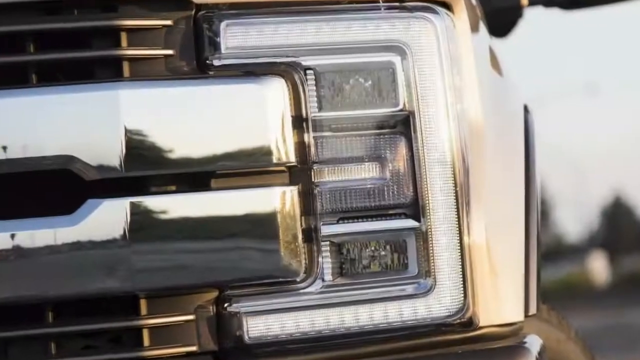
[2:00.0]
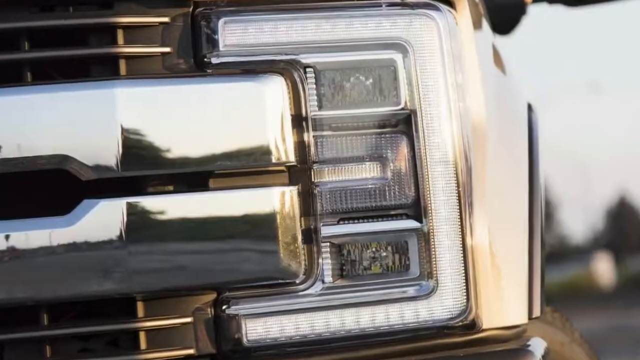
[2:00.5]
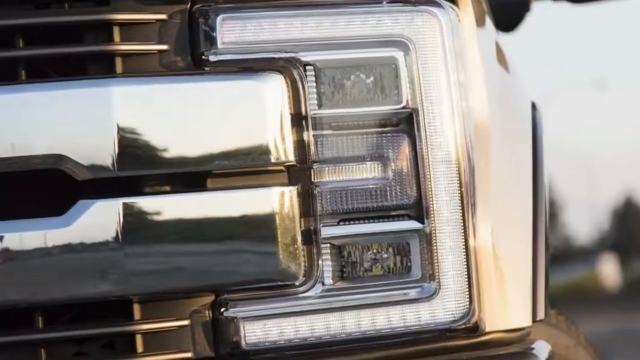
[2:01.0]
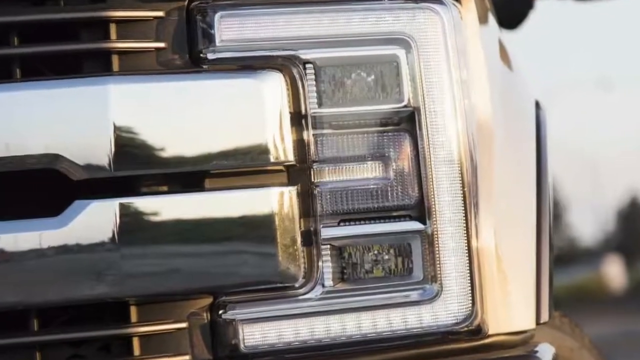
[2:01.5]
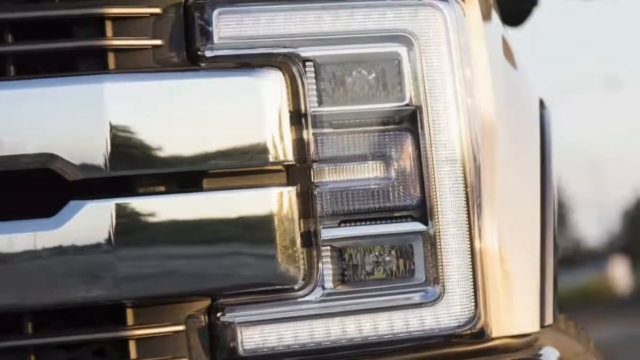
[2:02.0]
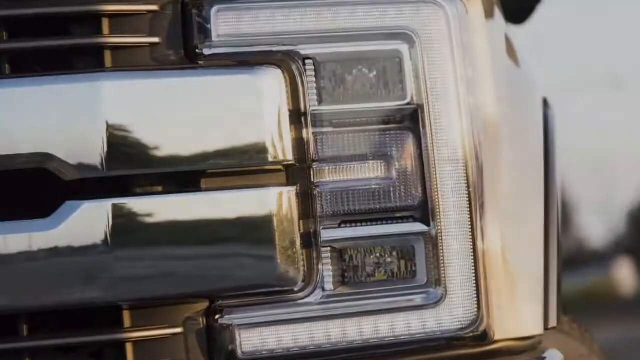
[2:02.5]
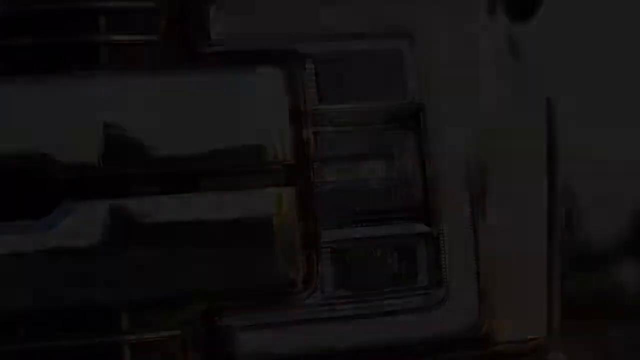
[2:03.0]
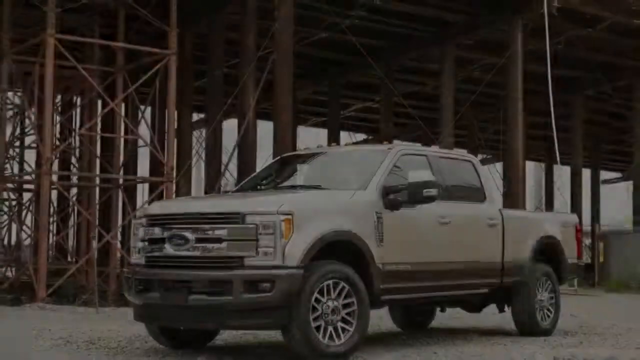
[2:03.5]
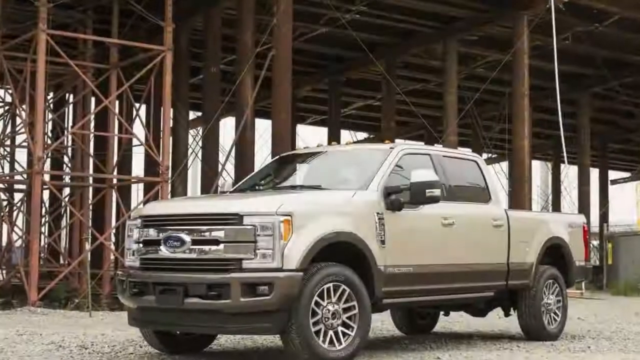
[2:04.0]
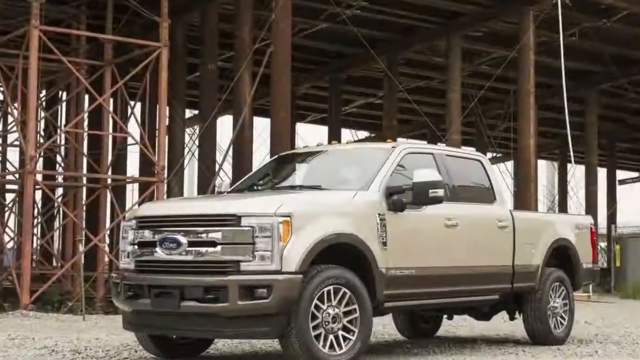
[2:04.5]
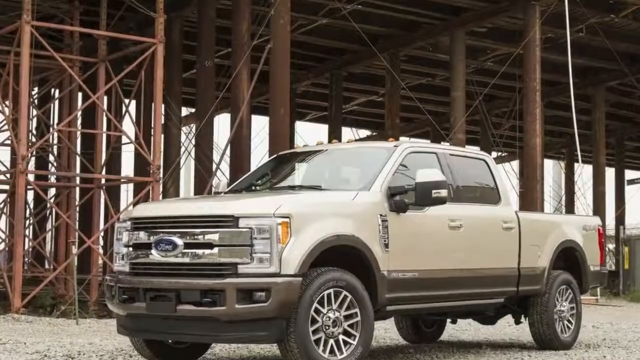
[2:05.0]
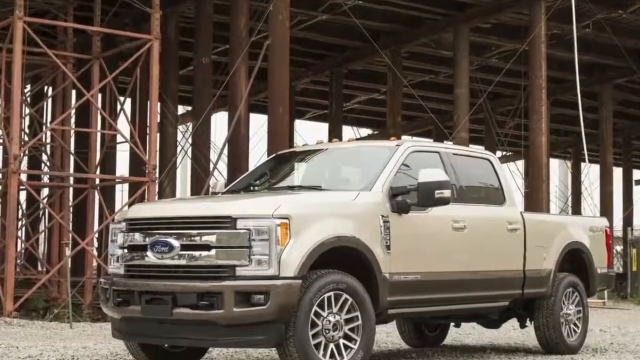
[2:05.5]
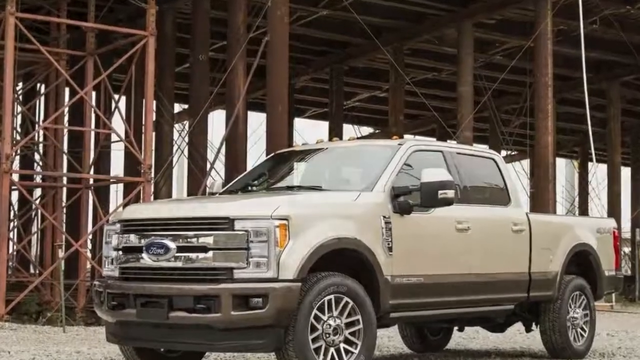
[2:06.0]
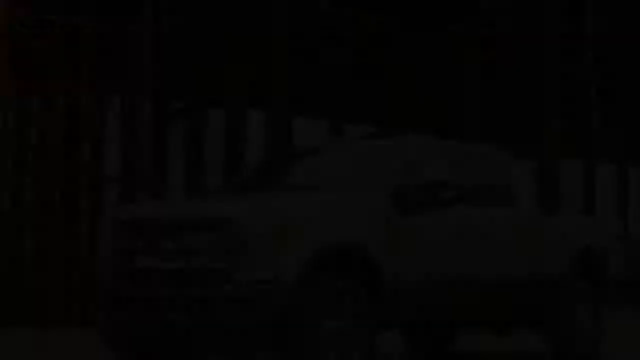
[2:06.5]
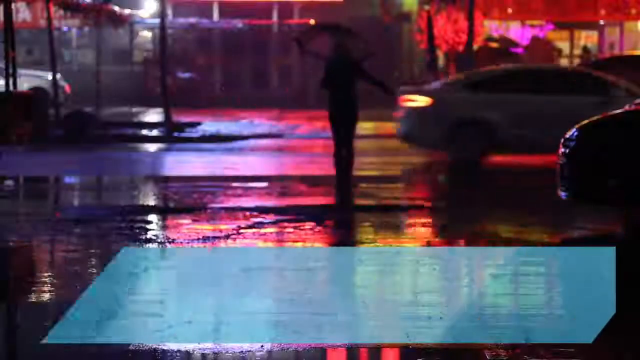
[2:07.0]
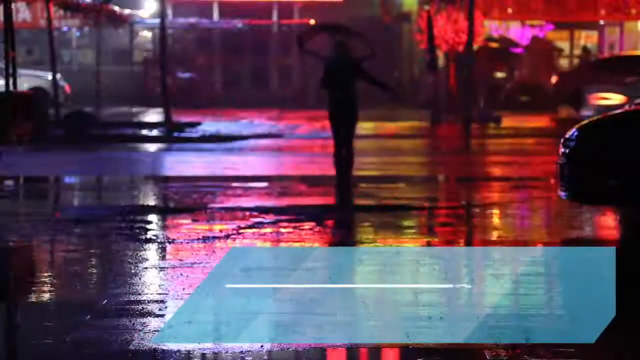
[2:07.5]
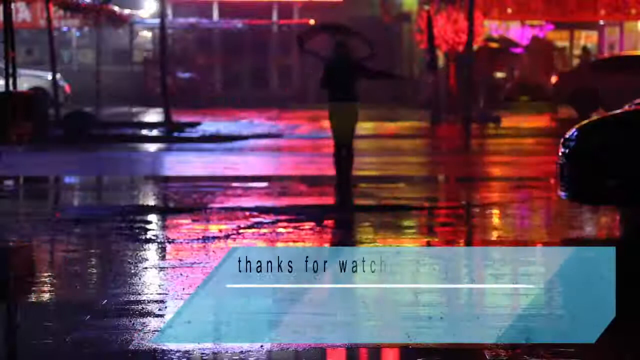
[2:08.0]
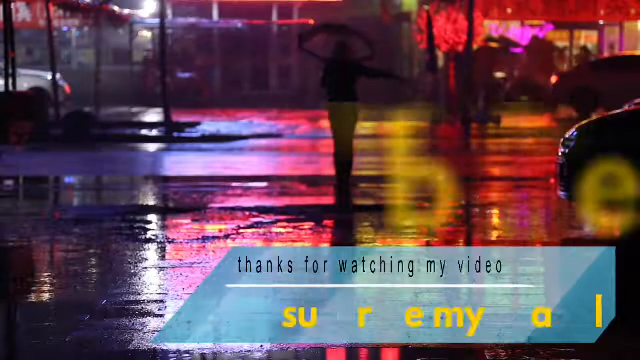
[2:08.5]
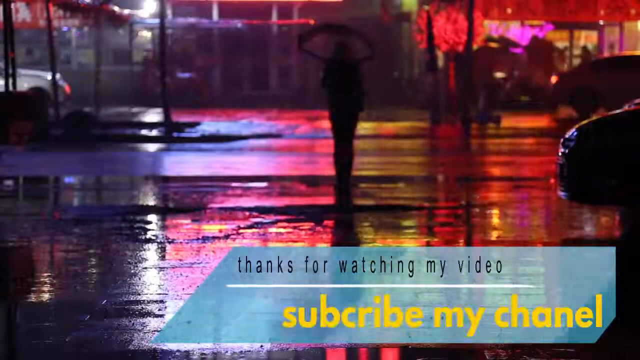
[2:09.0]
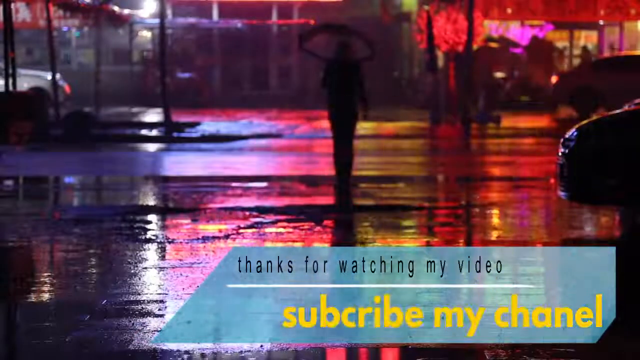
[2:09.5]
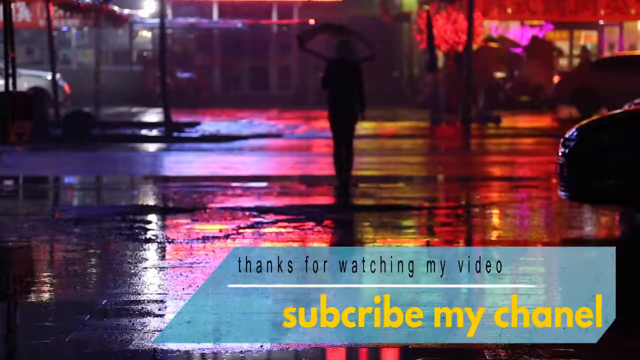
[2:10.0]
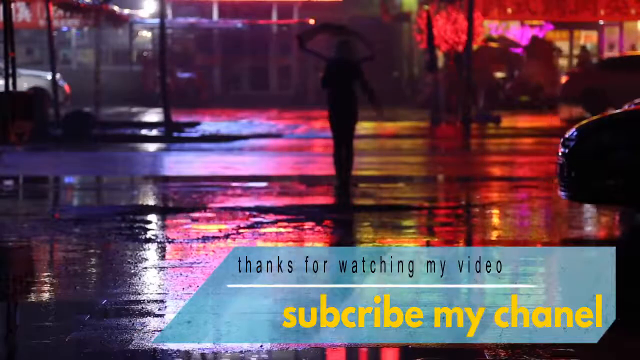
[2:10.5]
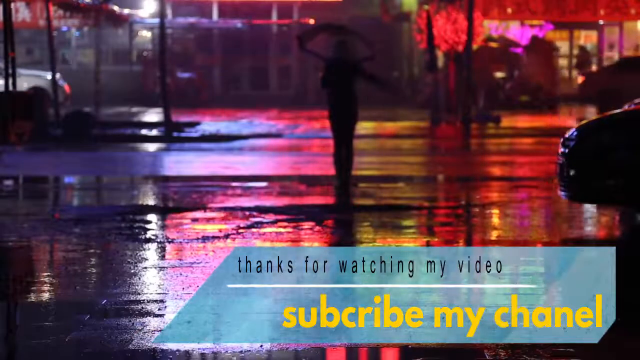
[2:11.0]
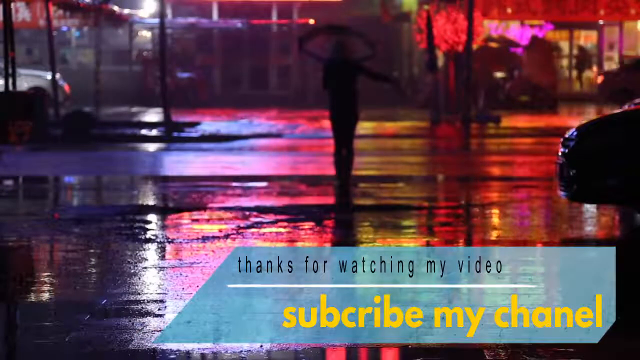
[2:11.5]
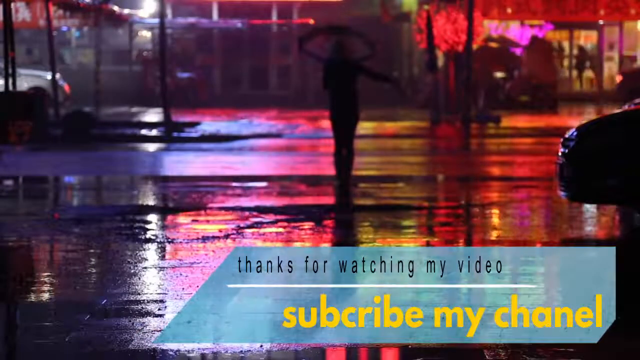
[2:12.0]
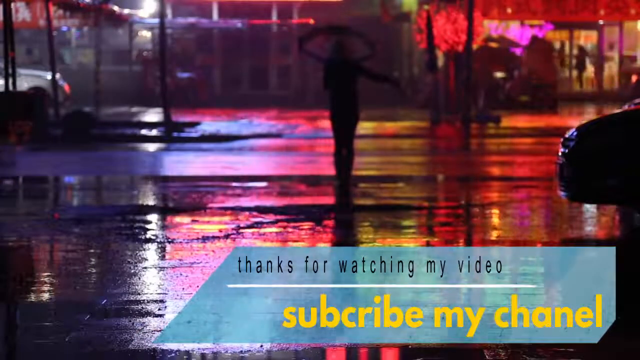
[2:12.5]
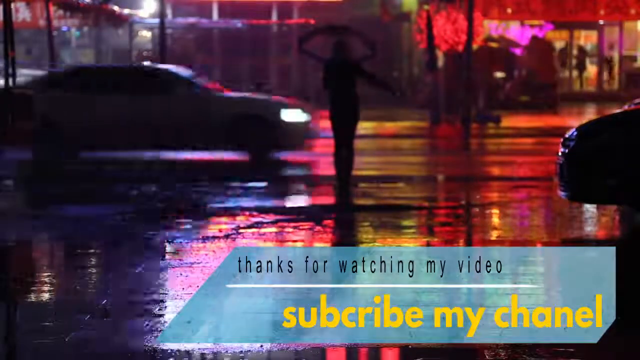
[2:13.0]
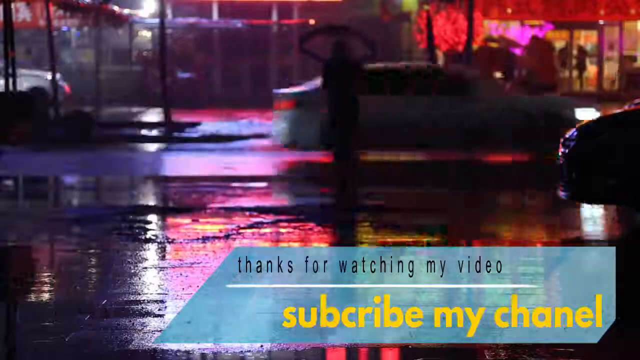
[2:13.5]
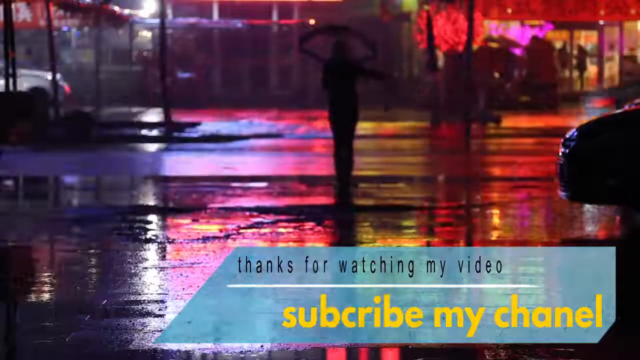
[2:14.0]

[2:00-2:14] An image of the reverse C-shaped rectangular headlights zooms in very gently. The earlier image of the vehicle in front of the metal bridge supports follows. Then comes a night scene with a wet road and bright red lights shining on it as a car drives past. A woman stands in the middle of the road holding an umbrella above her head and holding an arm out. The caption "thanks for watching my video" appears along the bottom on a sort of diagonal rectangular design of various blue stripes, with the words "subcribe my Chanel" at the bottom. The woman raises her right arm horizontally; it is unclear whether she faces toward or away from the camera. In the background there appears to be a quite busy shop, and another car goes past with its headlights on. She puts her arm down.